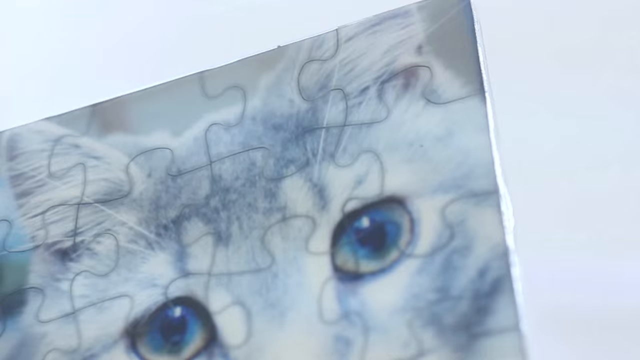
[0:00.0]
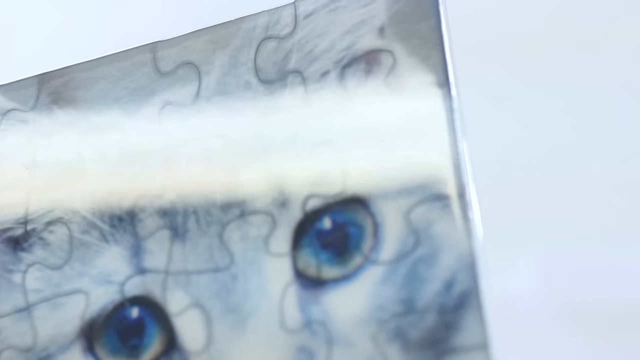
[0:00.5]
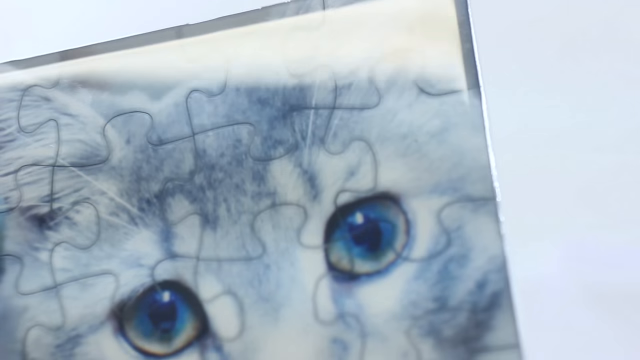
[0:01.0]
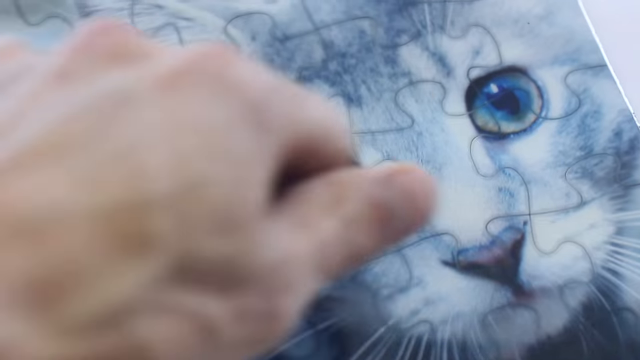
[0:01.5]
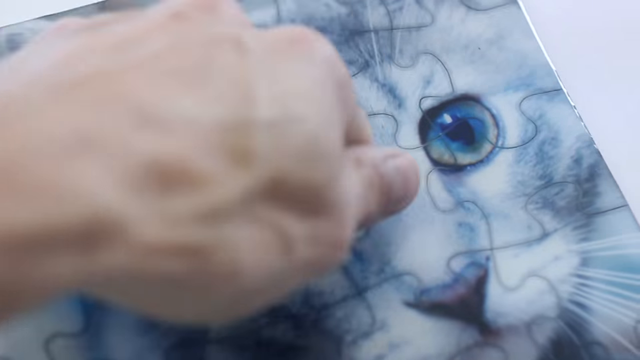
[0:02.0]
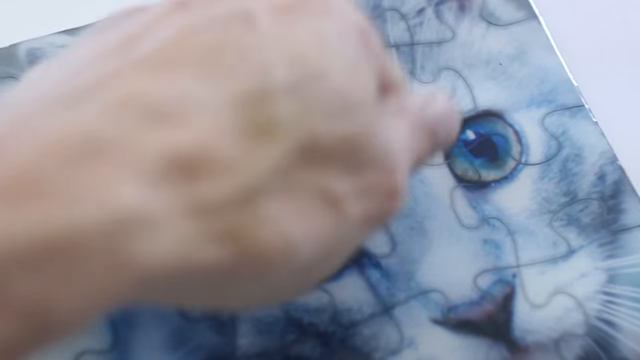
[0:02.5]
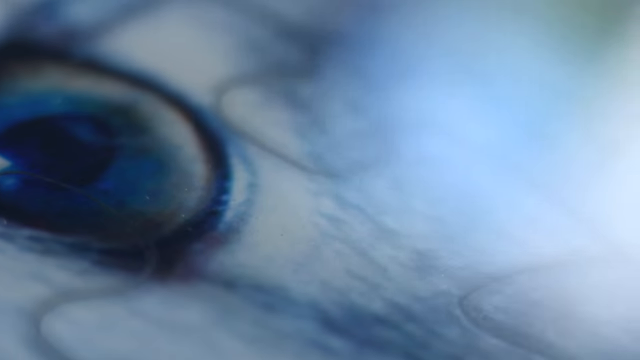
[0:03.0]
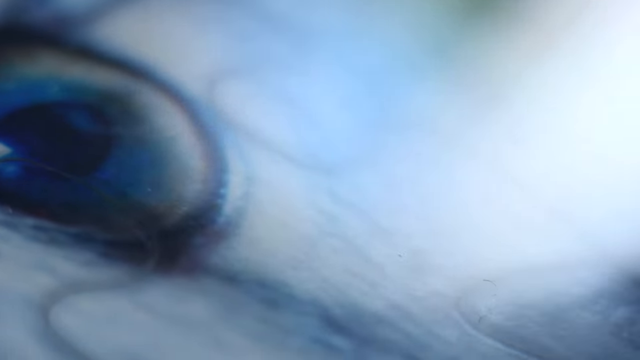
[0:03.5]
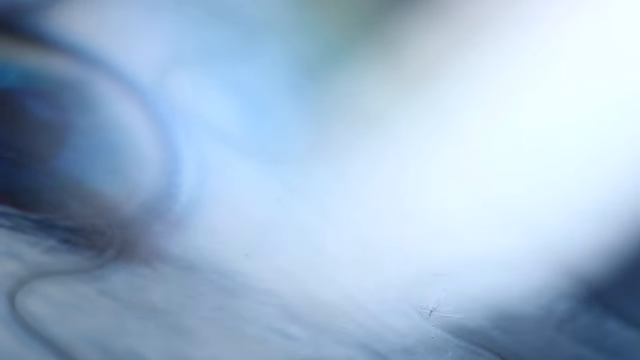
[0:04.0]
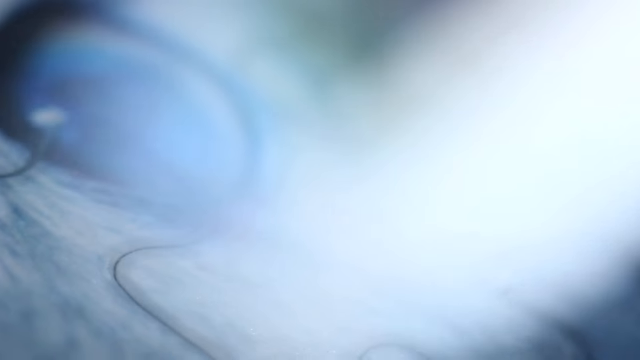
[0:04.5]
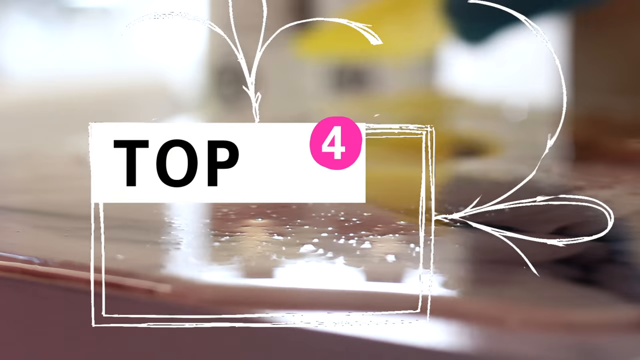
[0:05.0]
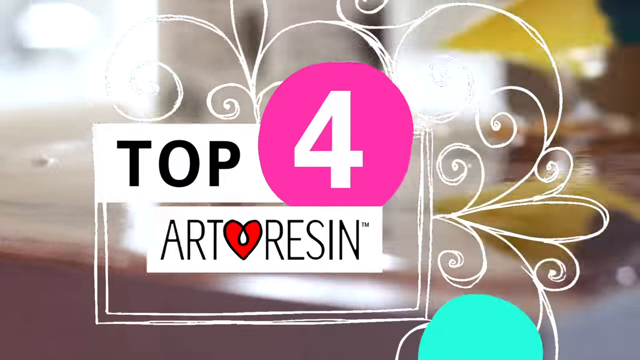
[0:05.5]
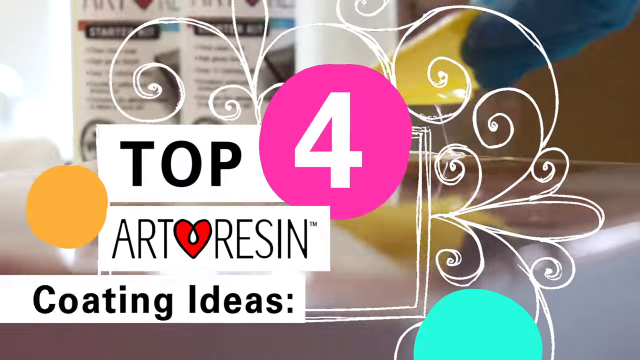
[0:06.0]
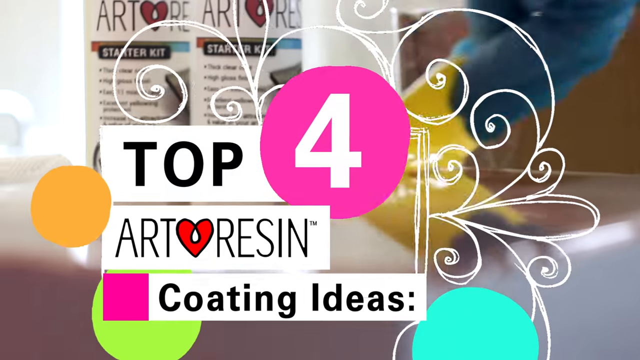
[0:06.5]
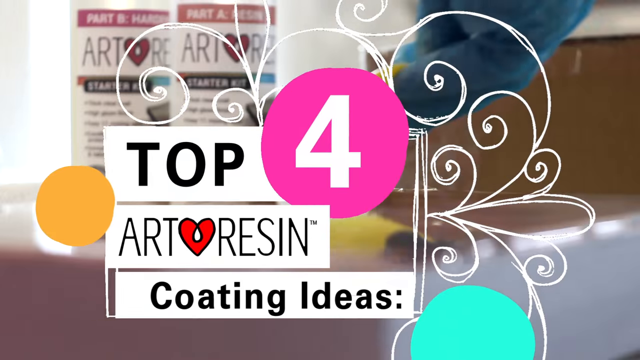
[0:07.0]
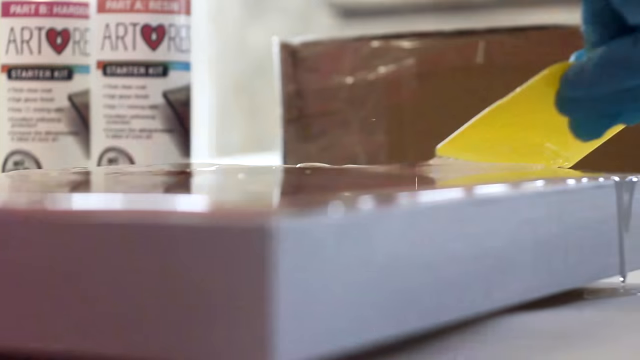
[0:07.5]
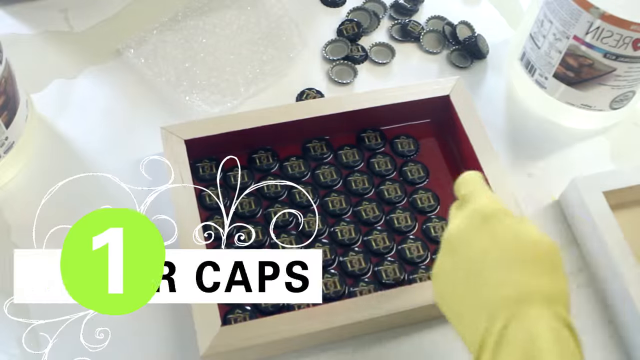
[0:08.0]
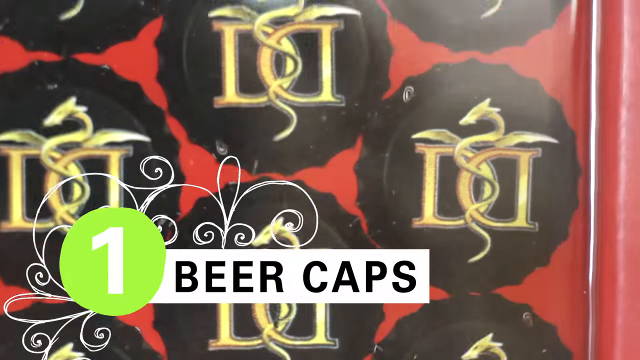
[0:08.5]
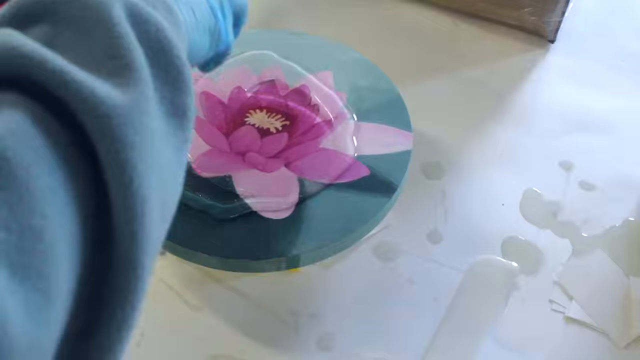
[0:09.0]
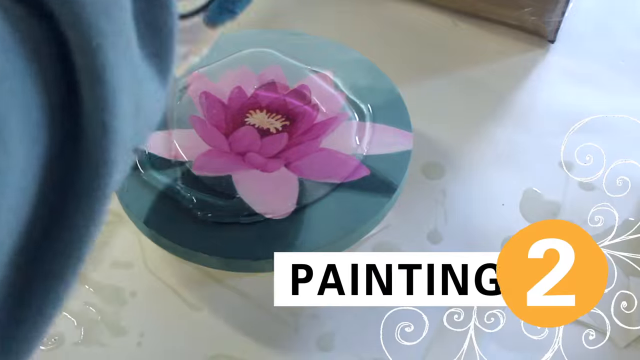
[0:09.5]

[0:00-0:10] Against a white background there is a cat frame, and a person with white skin knocks on it. The cat in the frame is black, gray and white. Someone then sprays the frame, and text mentioning art design appears, apparently presenting ideas for the frames, including a kitten frame. A person wearing gloves sprays the frames, and there seem to be other people spraying and painting the frames as well. A man wearing yellow gloves brushes the frame, and there is some sort of painting and other things on it.